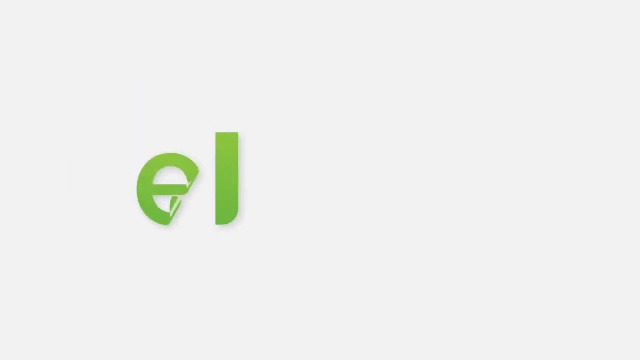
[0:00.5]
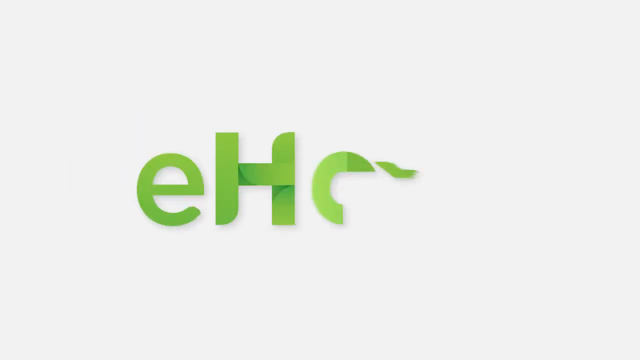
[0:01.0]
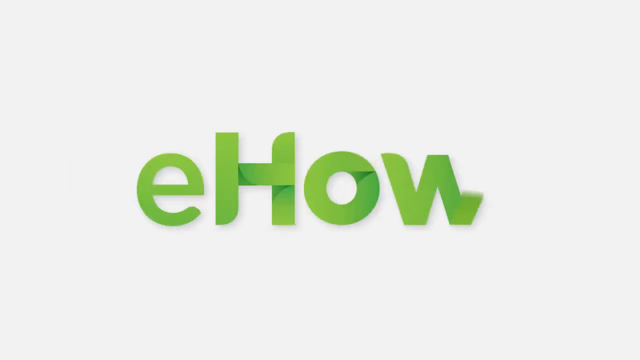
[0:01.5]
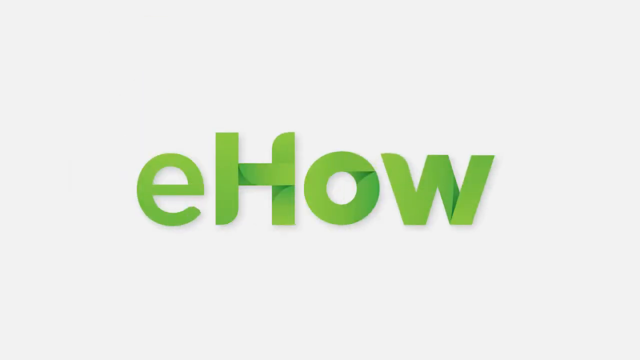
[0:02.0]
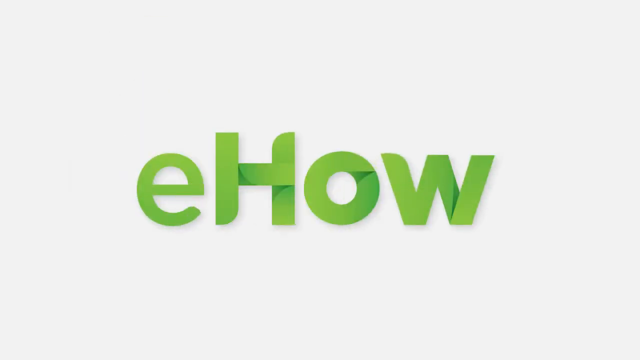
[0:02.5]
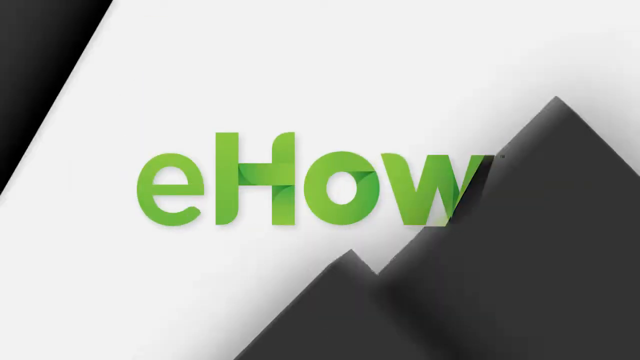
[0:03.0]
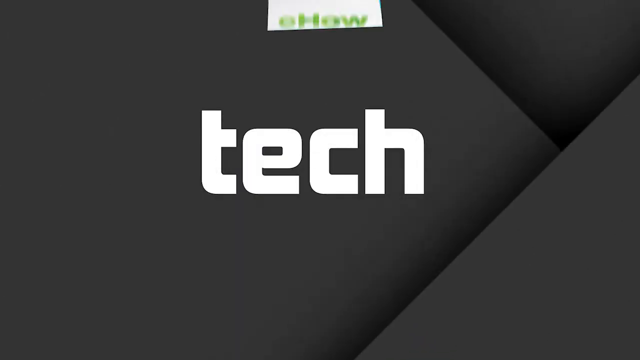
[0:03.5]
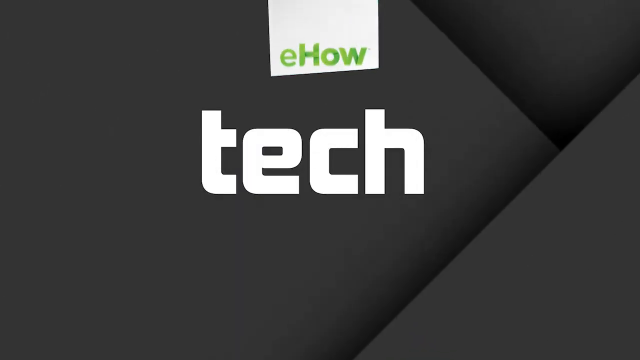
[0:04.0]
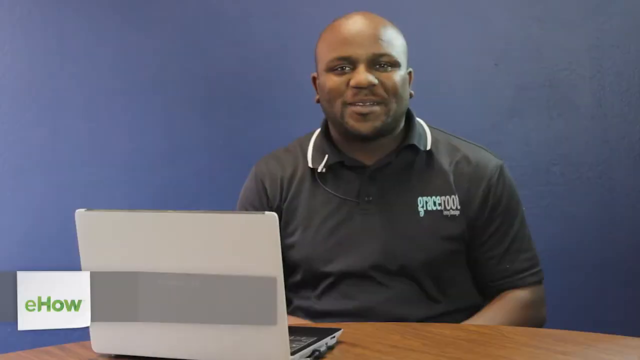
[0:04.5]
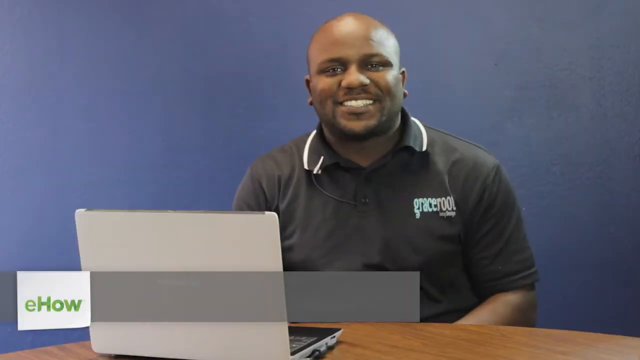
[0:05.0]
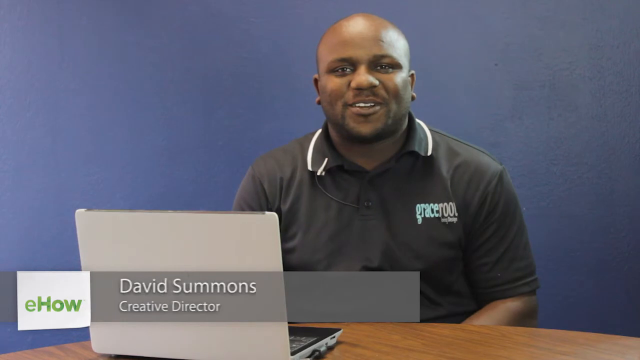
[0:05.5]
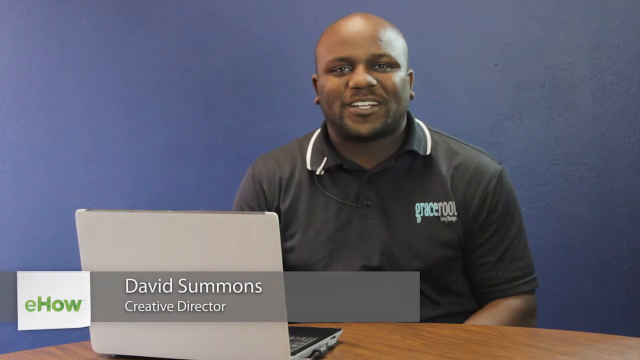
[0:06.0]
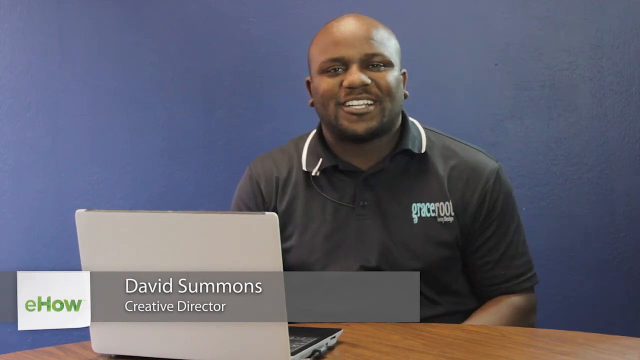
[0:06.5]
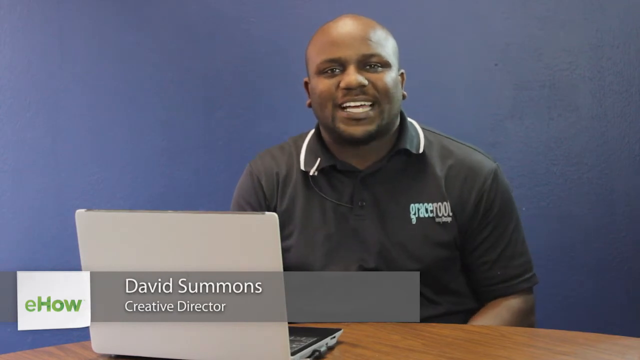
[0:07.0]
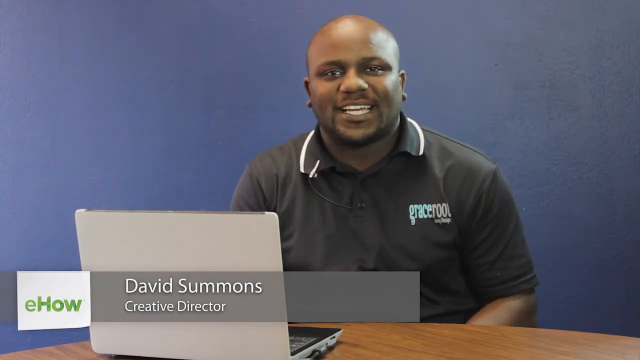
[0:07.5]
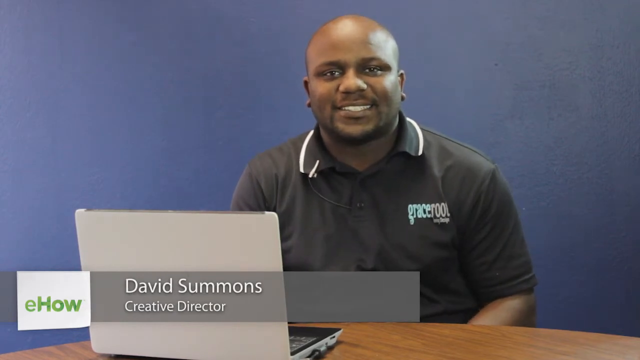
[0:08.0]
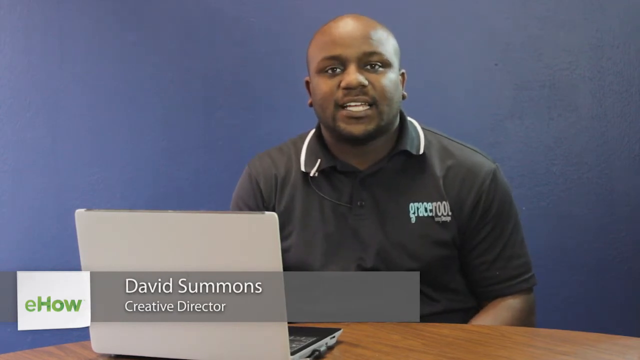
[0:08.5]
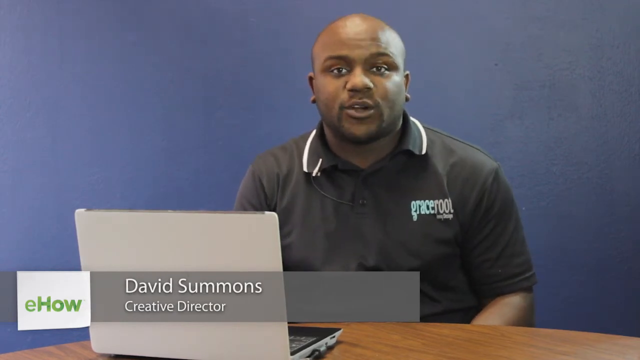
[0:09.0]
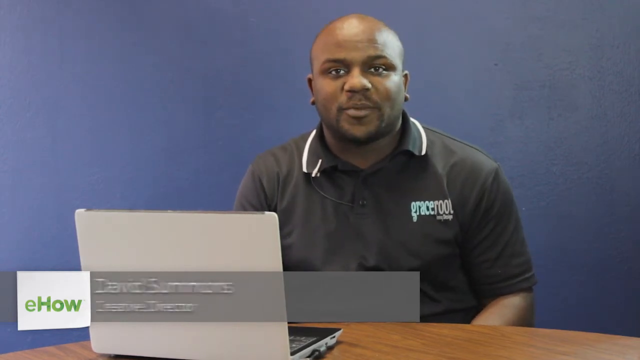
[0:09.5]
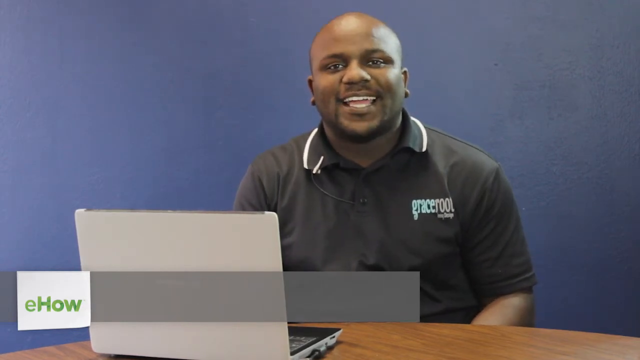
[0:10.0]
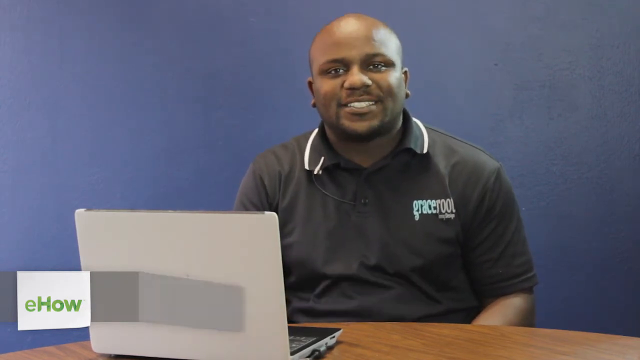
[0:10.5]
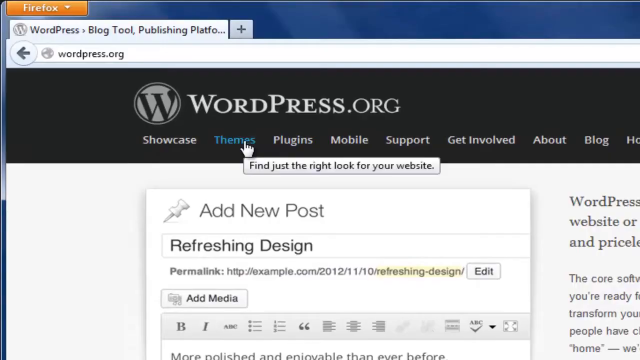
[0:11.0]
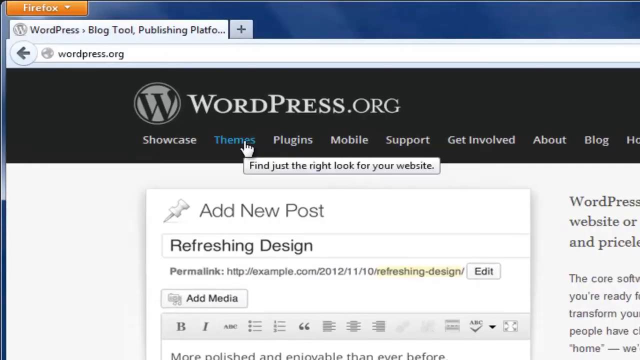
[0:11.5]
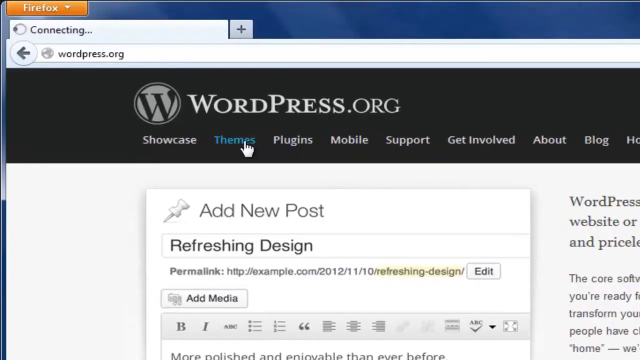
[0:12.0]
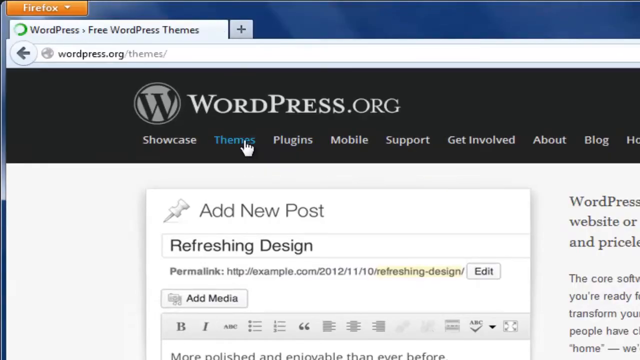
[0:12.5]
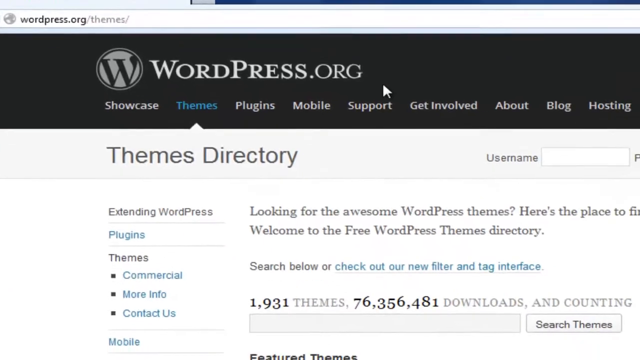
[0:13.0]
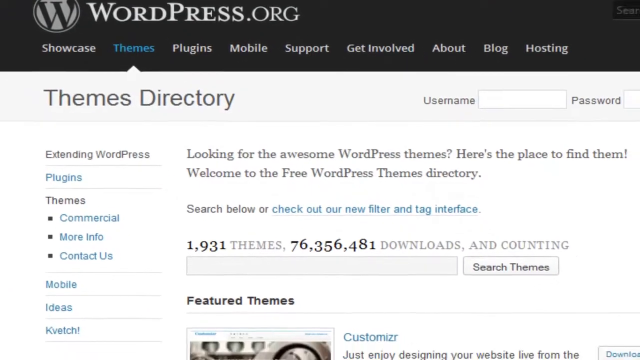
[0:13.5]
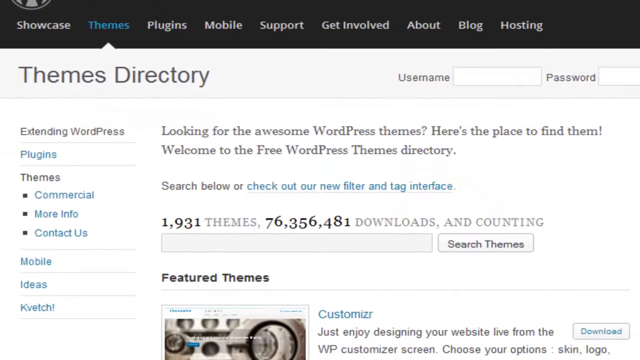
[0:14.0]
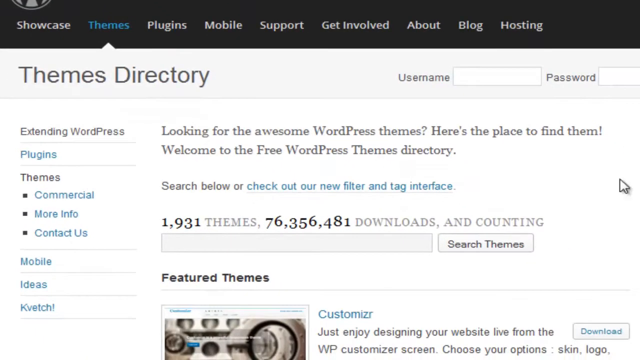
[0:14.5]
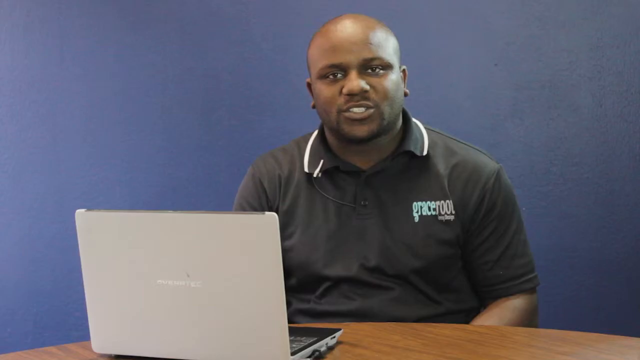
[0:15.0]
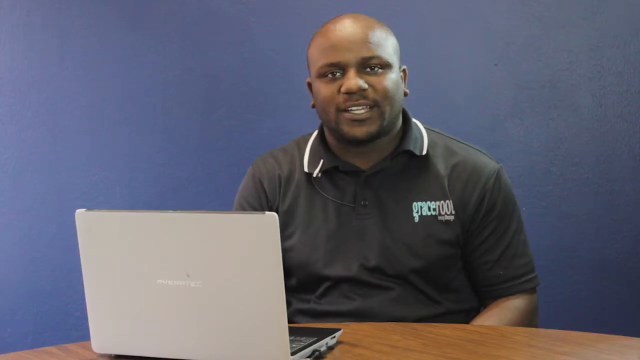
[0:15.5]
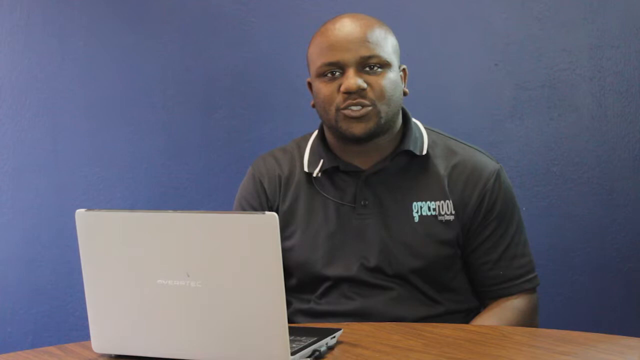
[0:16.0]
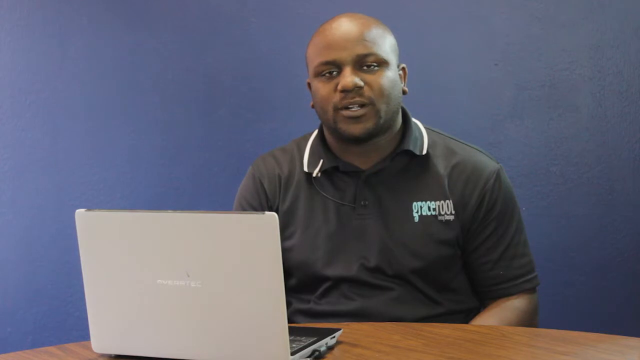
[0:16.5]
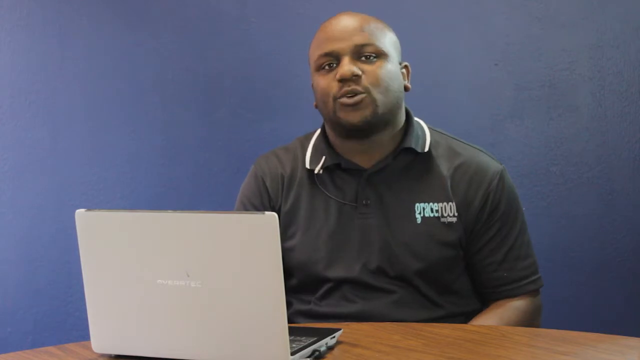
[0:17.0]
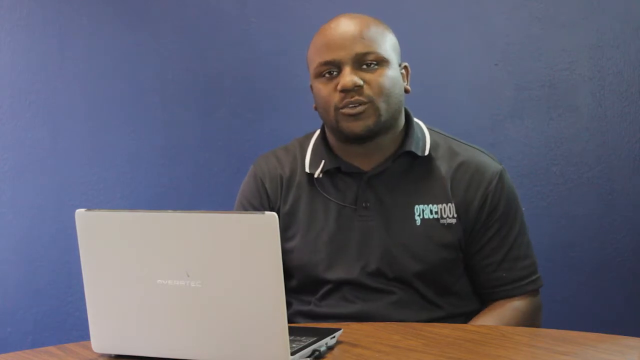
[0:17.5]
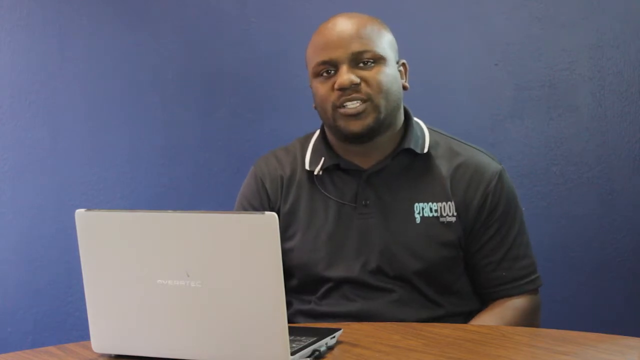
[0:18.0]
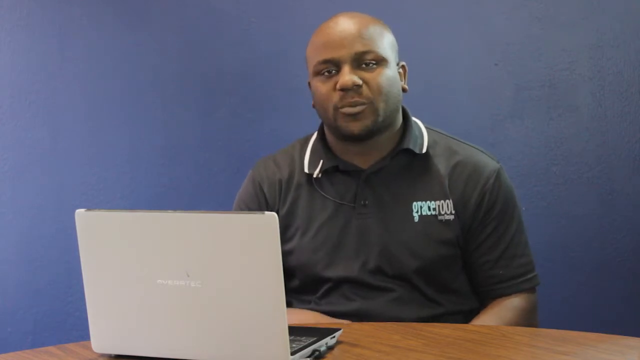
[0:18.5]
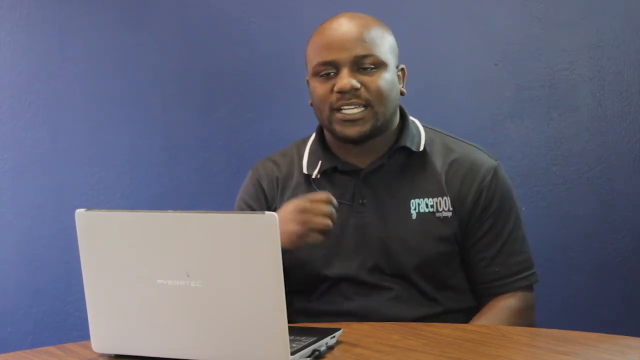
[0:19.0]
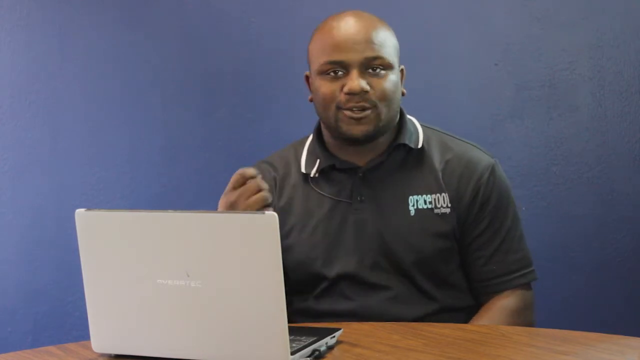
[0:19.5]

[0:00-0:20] A young man, identified as creative director David Summons of WordPress.org, appears. He has a dark complexion, wears a black t-shirt, and is apparently around 30. He looks happy and proud of himself as he describes something related to technology, with mention of a username and logging in. He is sitting at a wood table.